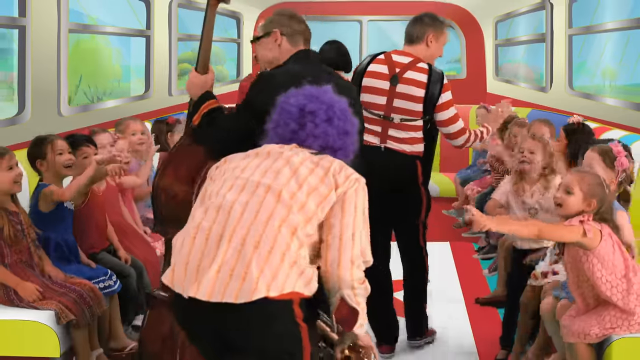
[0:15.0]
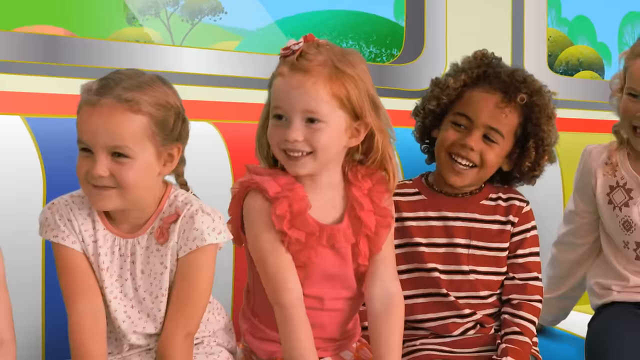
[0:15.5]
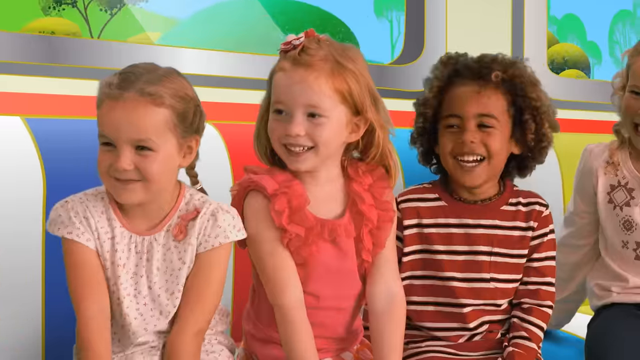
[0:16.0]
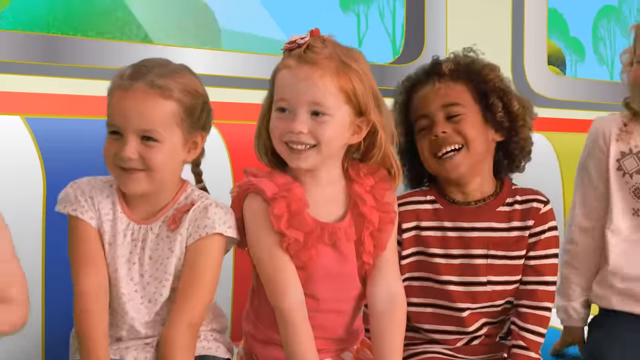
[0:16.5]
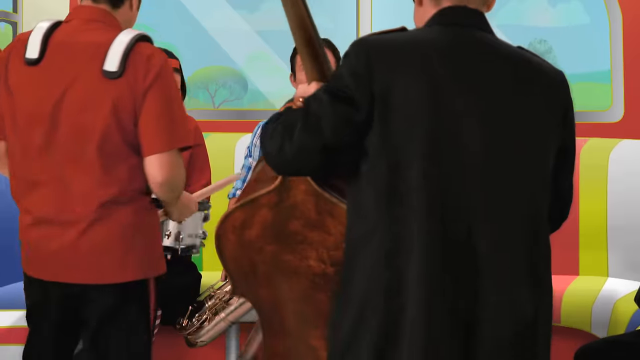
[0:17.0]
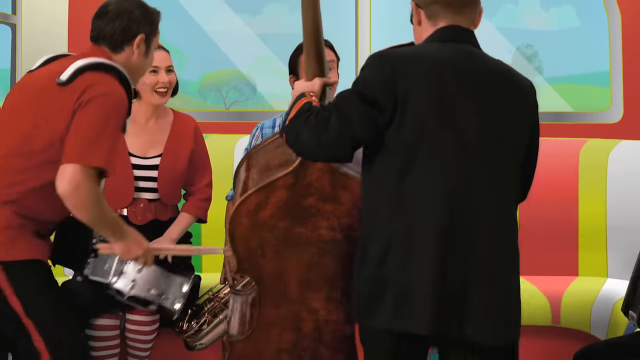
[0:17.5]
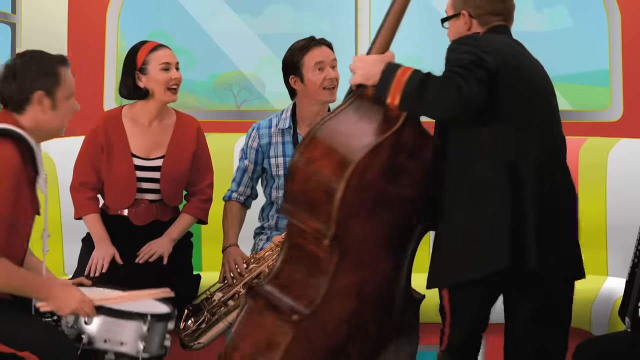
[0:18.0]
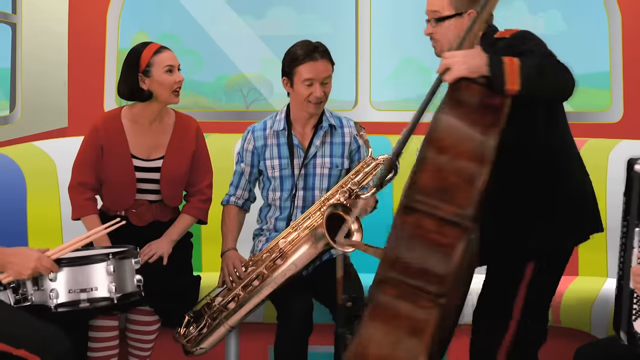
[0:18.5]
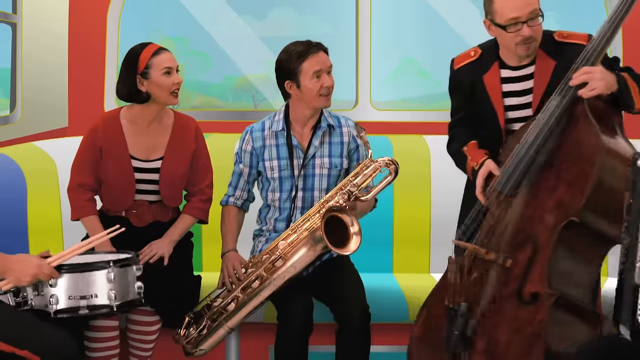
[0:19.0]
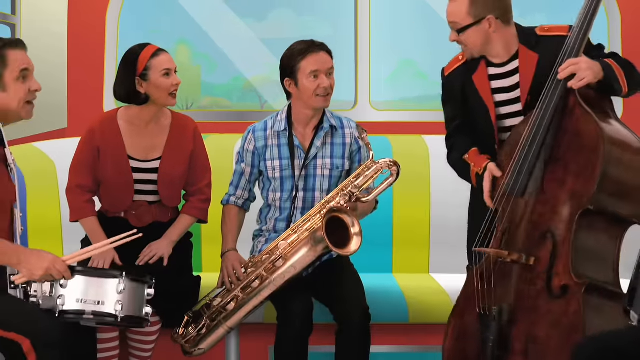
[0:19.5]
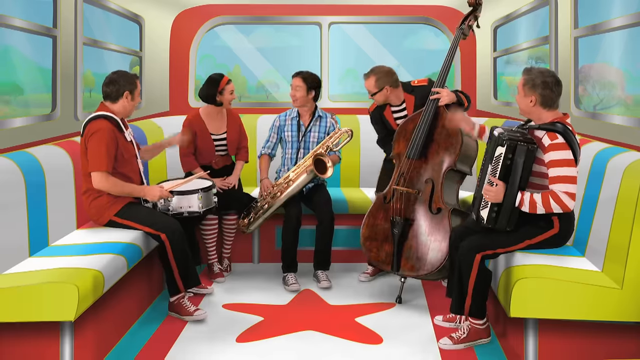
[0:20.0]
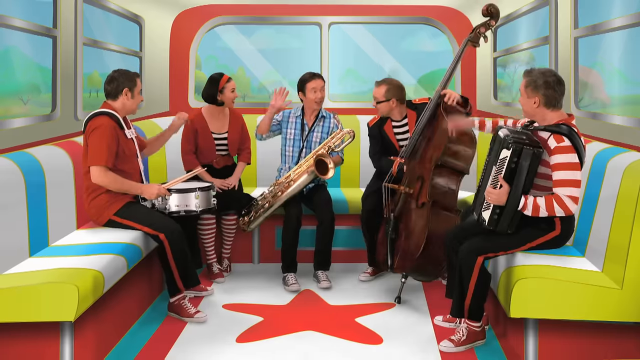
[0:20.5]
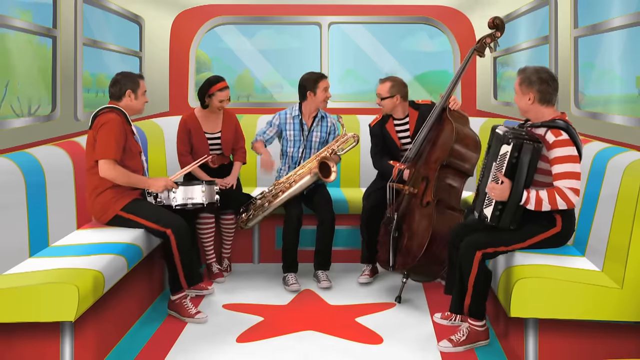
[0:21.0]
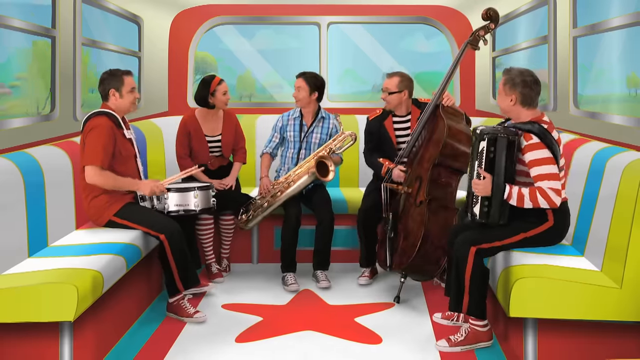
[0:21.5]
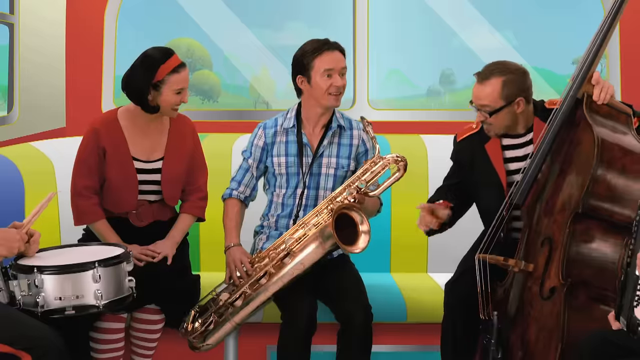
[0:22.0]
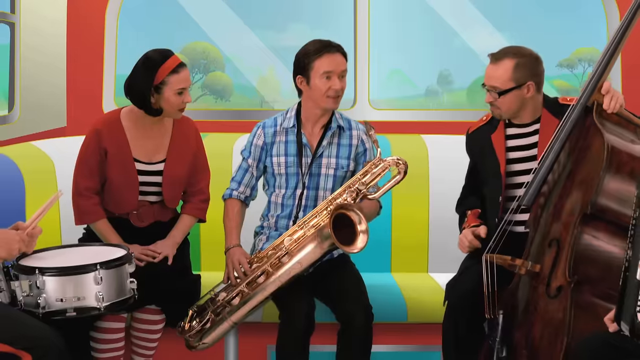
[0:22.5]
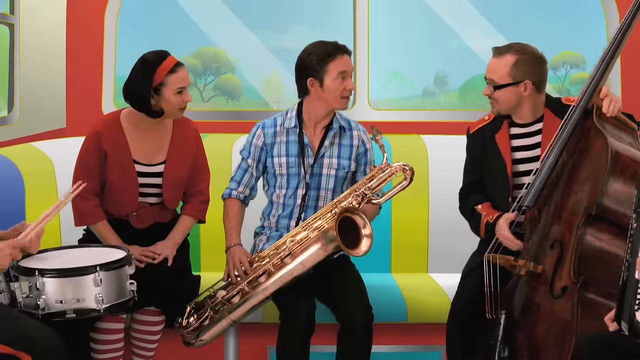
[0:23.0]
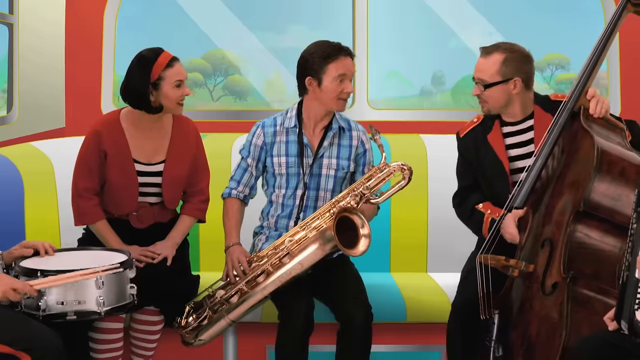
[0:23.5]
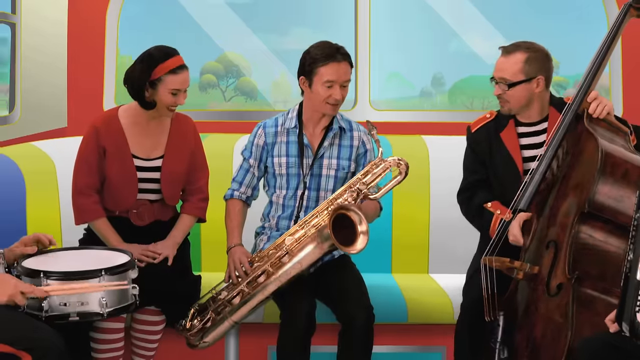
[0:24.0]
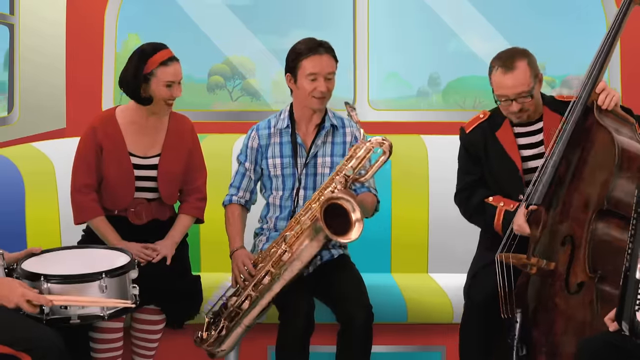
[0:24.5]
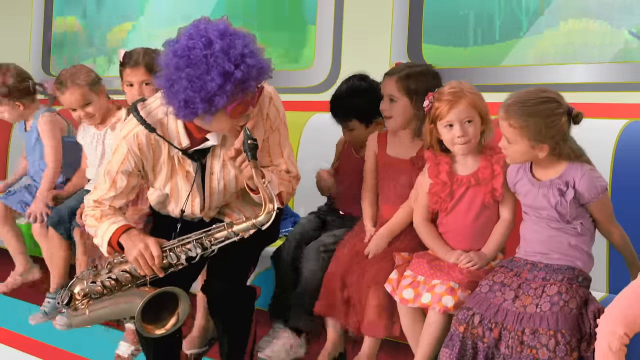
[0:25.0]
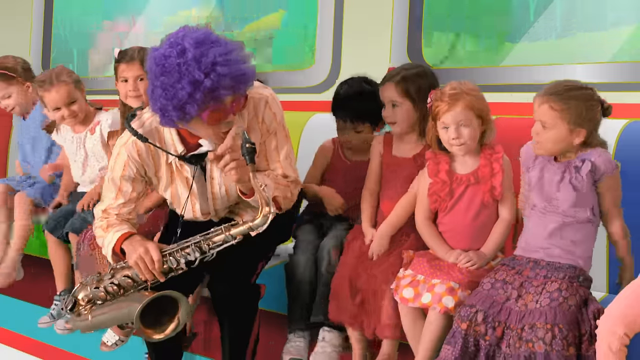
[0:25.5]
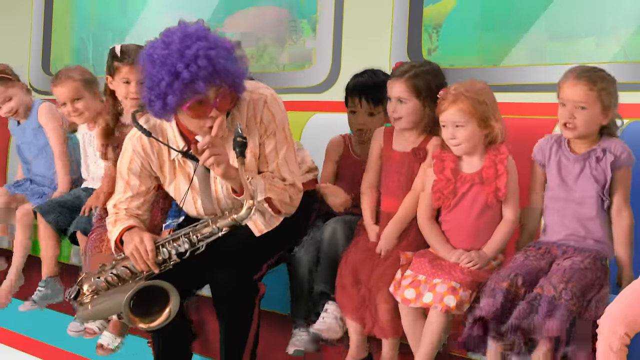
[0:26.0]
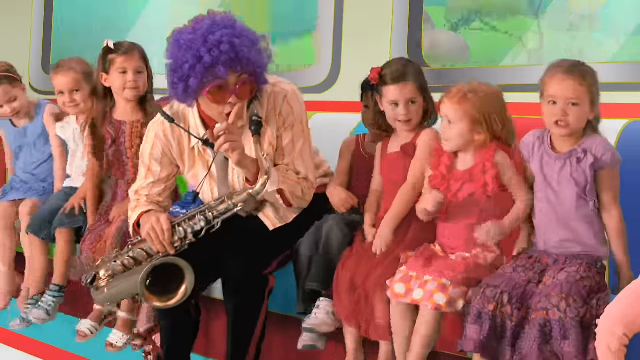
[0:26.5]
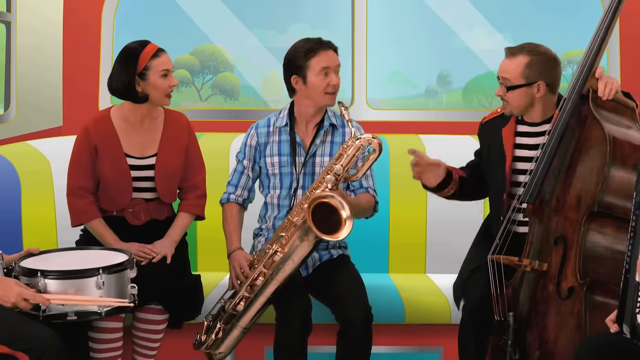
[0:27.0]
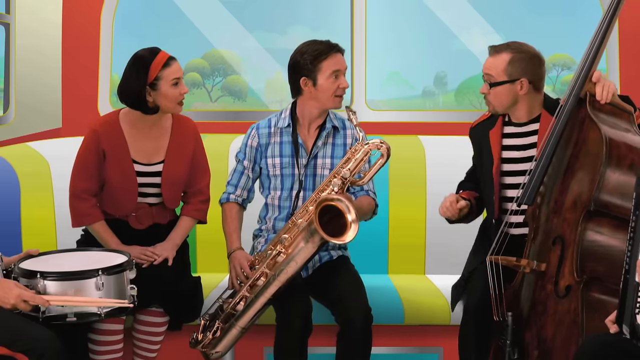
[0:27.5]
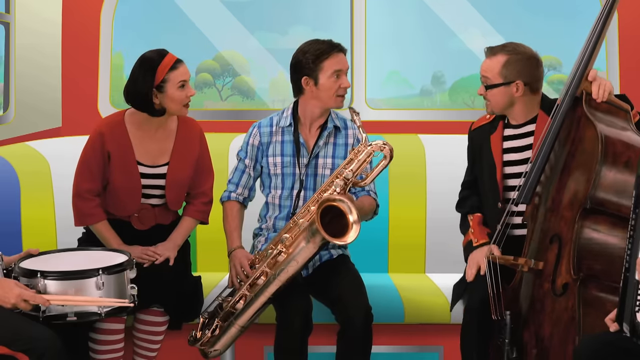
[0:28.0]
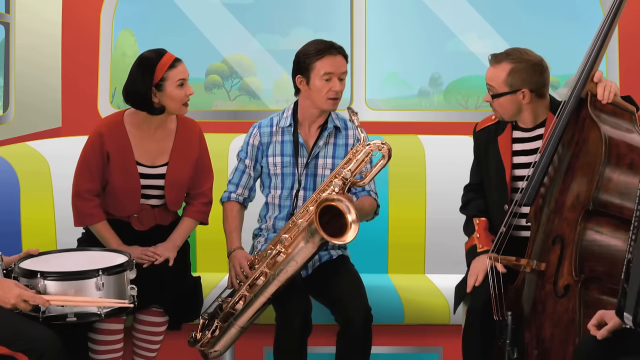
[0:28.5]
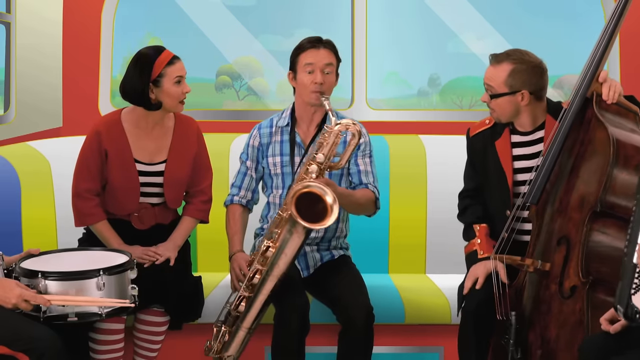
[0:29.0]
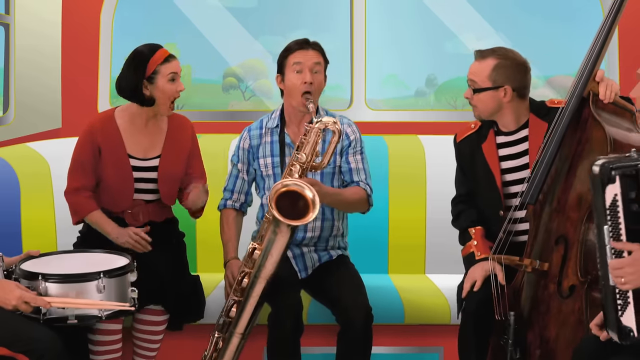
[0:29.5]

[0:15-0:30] The Lala band is inside the bus, sitting in a U in the back. There seem to be two saxophone players: one with the children, wearing a purple fro wig and big glasses, who is the one who got on, and a different one in the back with the rest of the players, wearing a blue check shirt while the others wear red, black and white. The saxophone player in the back keeps trying to play, but the other band members keep interrupting him by talking to him. The saxophone player with the fro holds a finger in front of his mouth, telling the children to be quiet, and the children look at him very animatedly. Outside the animated bus, trees go by on a blue day. The children are laughing and look like they are having fun. The band's instruments are drums, a saxophone, a cello and a bass cello.